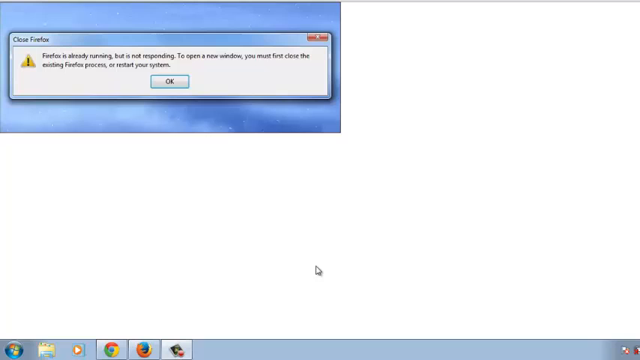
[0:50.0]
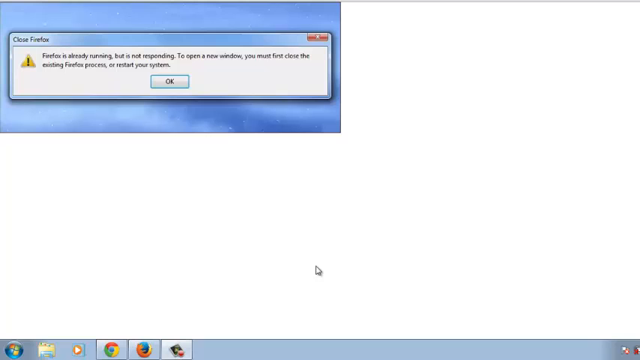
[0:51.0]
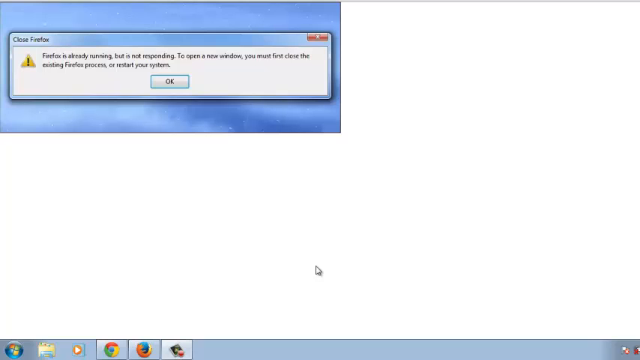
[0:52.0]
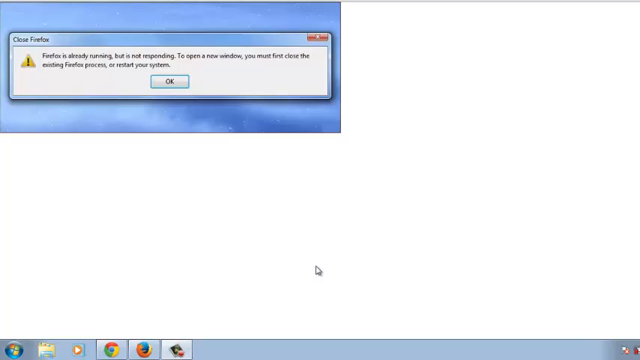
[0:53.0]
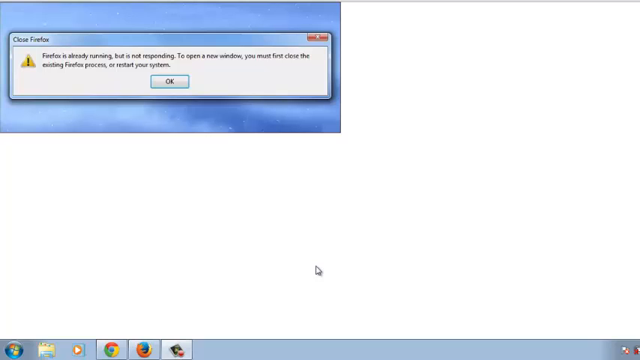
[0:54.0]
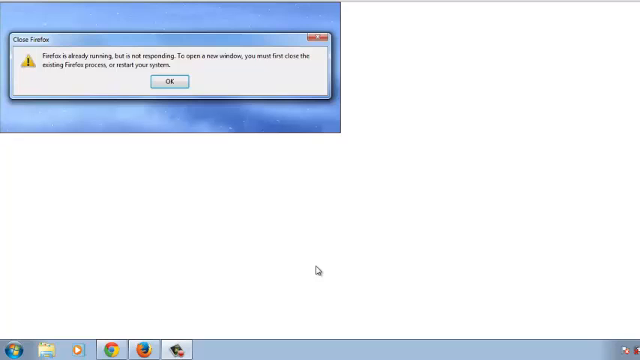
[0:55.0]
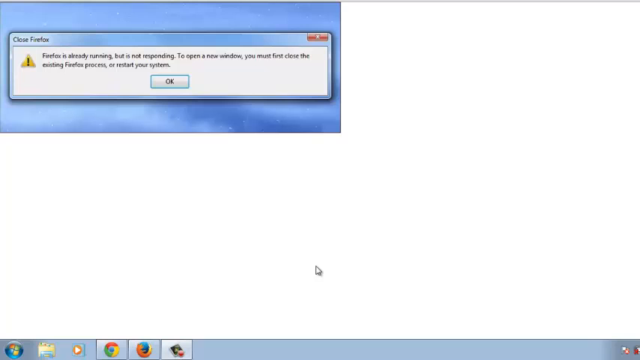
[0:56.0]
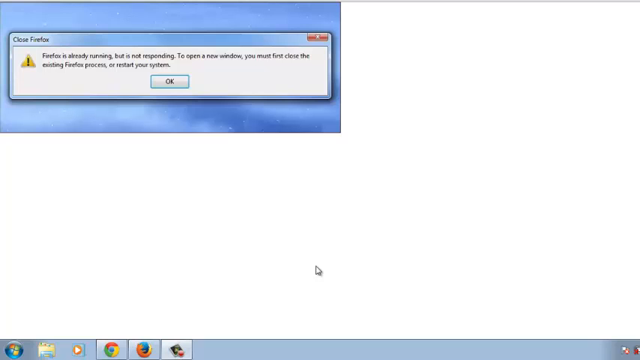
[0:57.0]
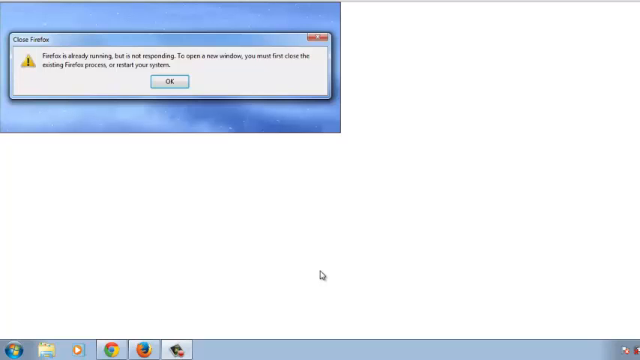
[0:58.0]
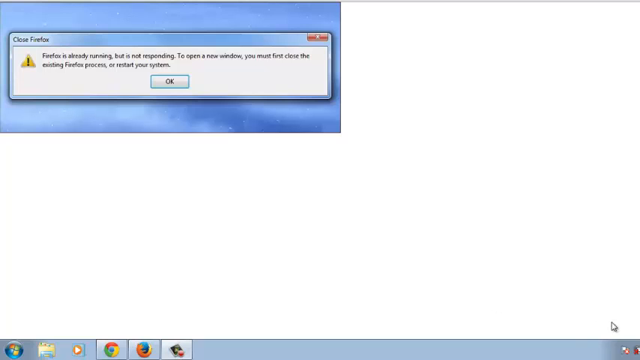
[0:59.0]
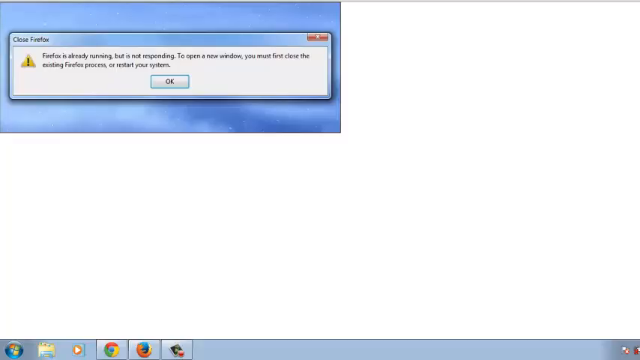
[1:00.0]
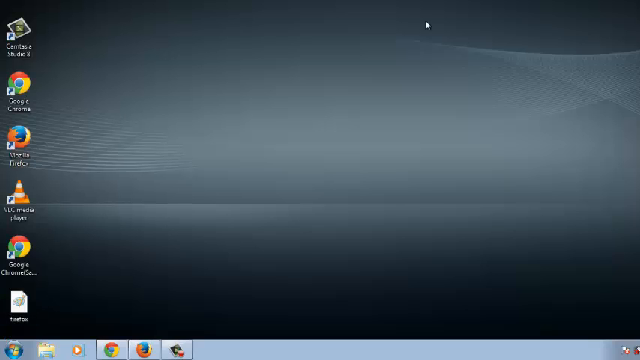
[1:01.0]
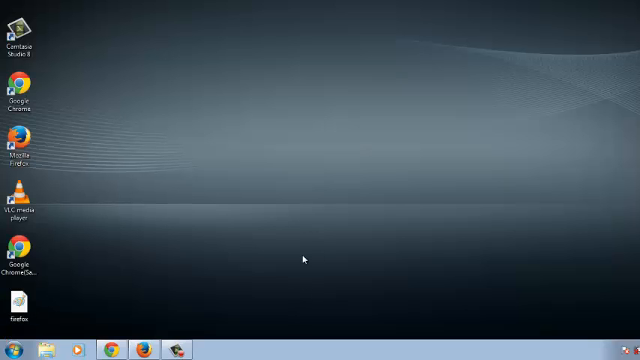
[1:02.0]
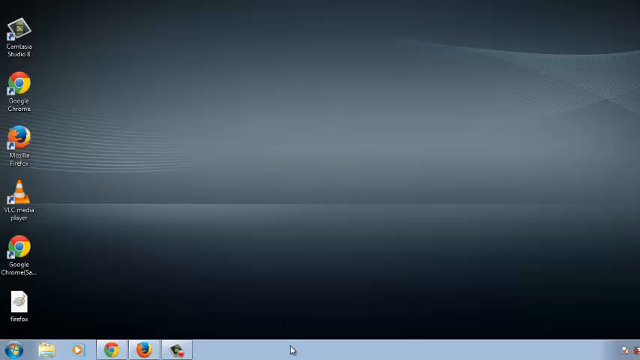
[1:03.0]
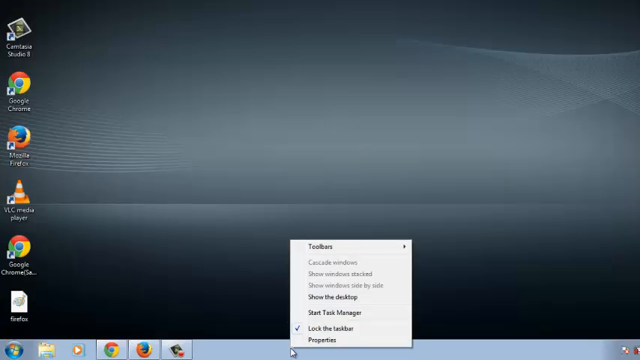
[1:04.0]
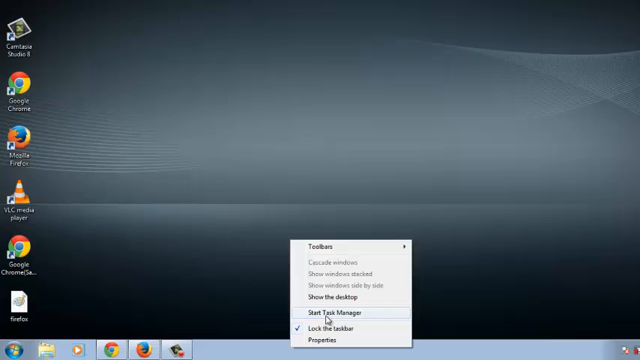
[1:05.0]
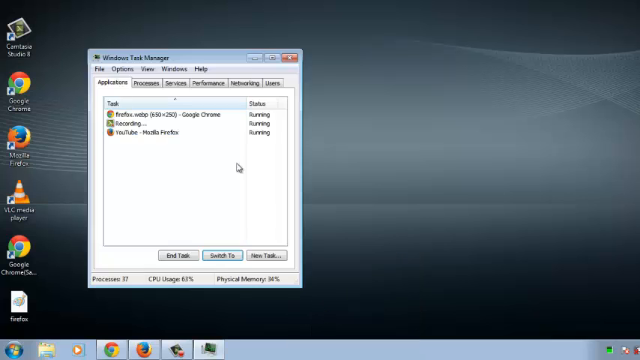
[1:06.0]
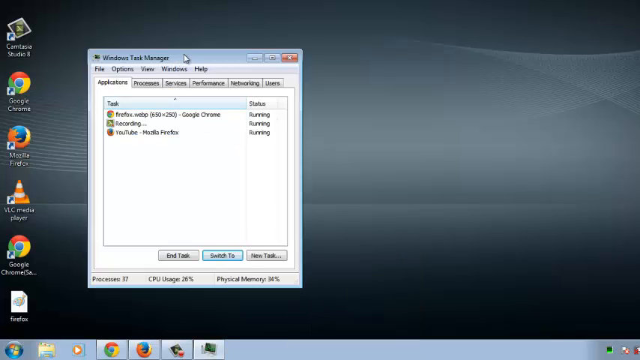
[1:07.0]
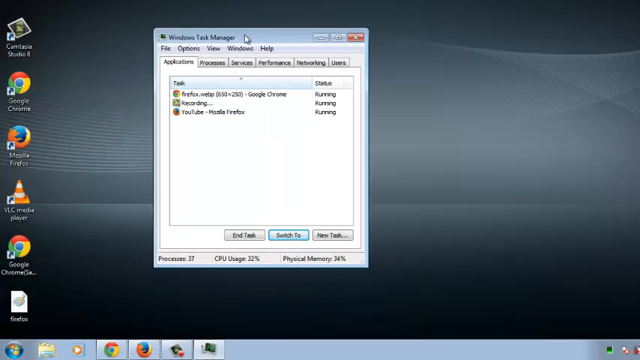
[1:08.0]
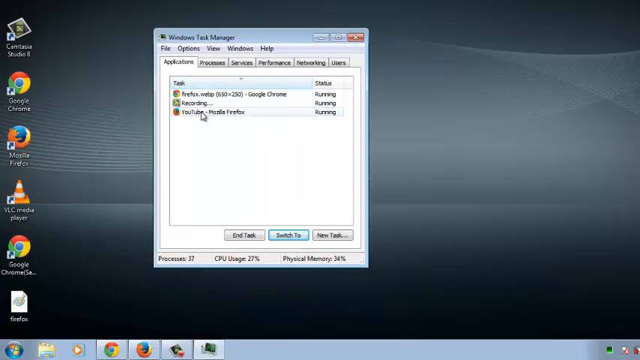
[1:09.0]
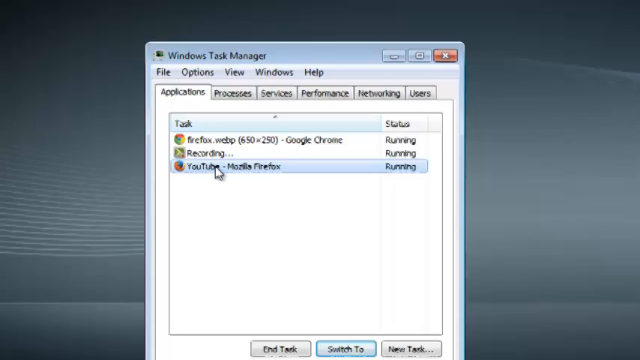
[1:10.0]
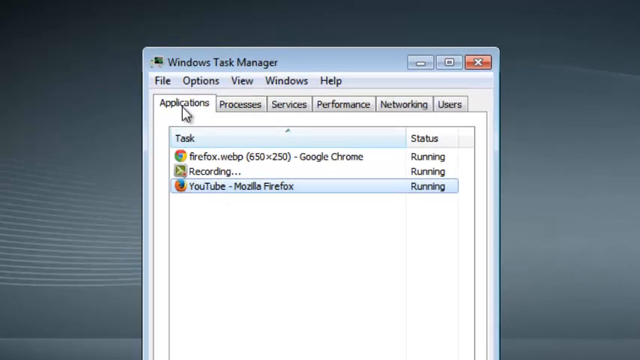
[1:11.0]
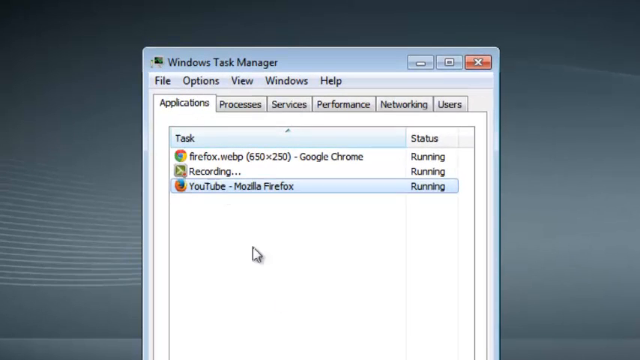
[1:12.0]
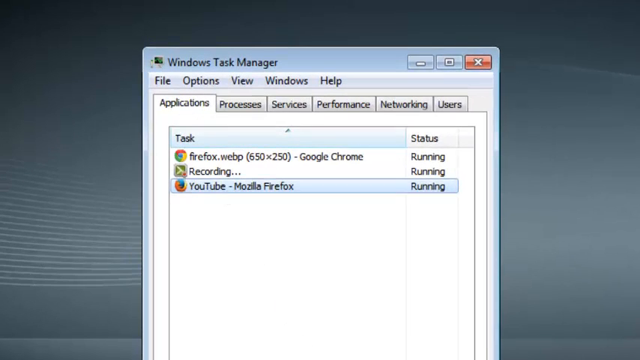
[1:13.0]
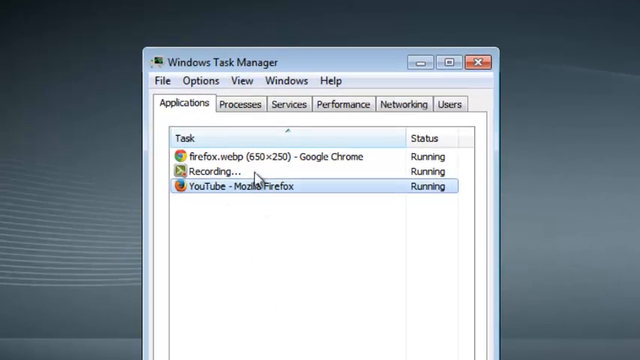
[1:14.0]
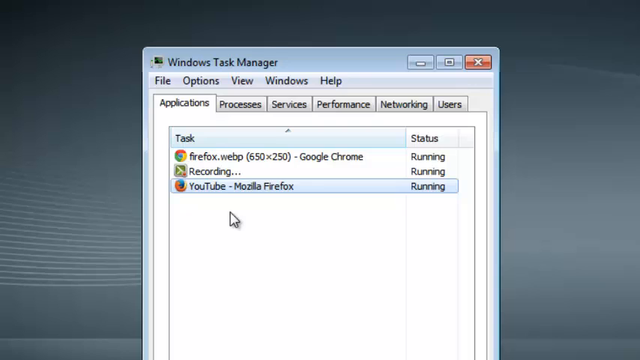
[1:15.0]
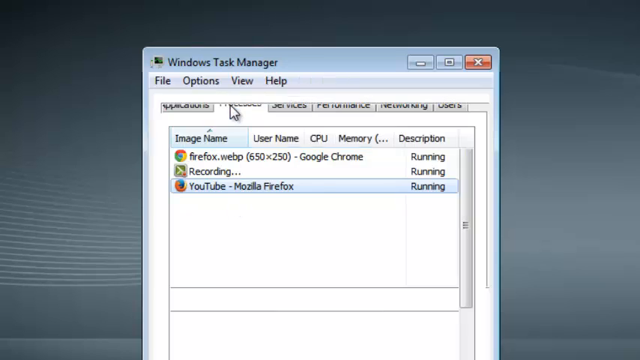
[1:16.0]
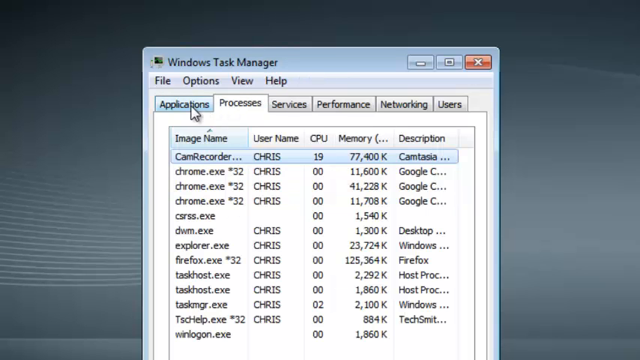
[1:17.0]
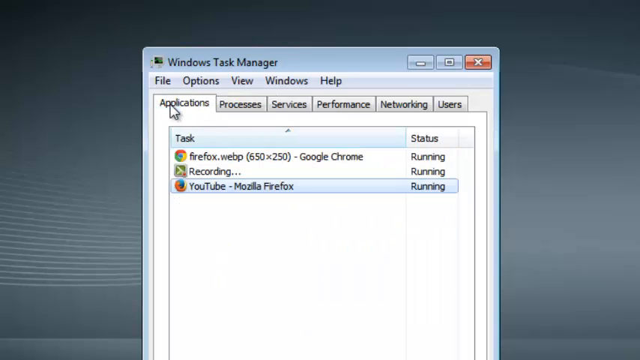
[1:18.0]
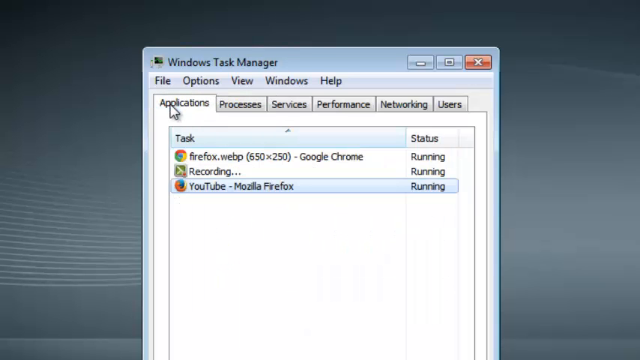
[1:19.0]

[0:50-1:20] The Firefox warning with its blue background is now small in the top left of the screen, and the rest of the screen is a white gradient background, with the old Windows panel along the bottom of the desktop. The user clicks a button at the bottom right of the screen, changing the desktop to a black background with several different wave patterns. A single column of applications runs down the left of the screen, including Chrome, Firefox and some other apps. He right-clicks the bottom panel, opening a pop-up menu, and clicks Start Task Manager. The old version of Windows Task Manager opens, showing that Firefox, the recording software and YouTube are open. He drags the window near the center of the screen, a little left of center. The view zooms in on the Task Manager, where YouTube is selected. He clicks the Processes menu, then clicks back to the Applications menu, and the mouse hovers over the Applications menu.